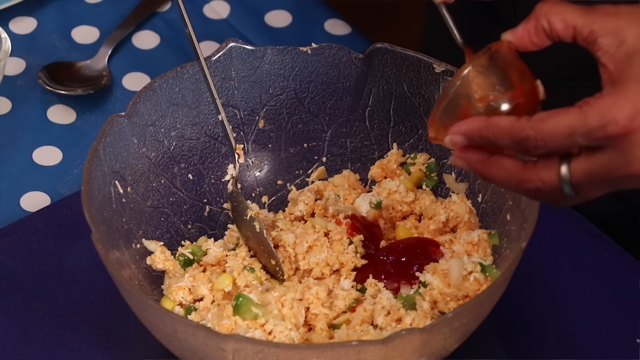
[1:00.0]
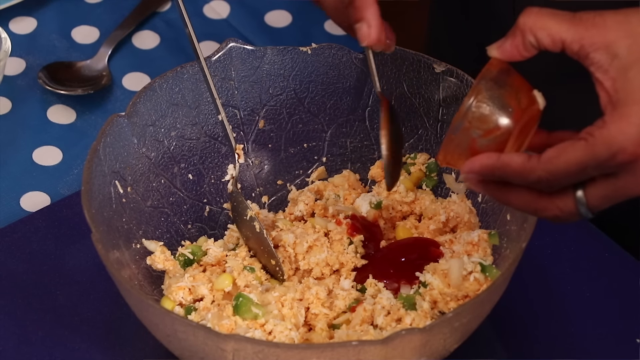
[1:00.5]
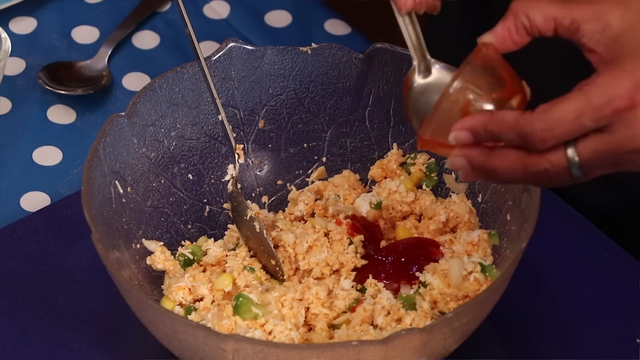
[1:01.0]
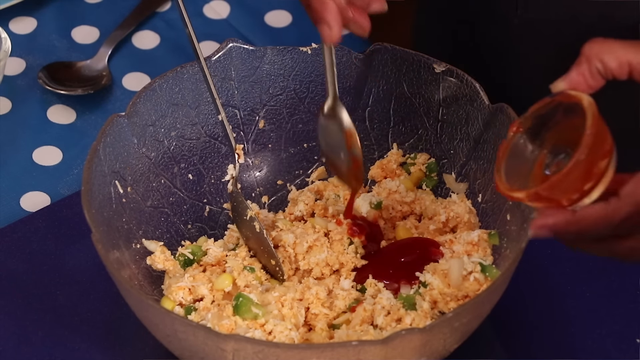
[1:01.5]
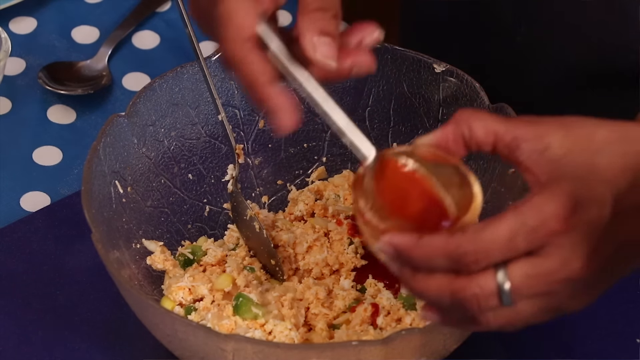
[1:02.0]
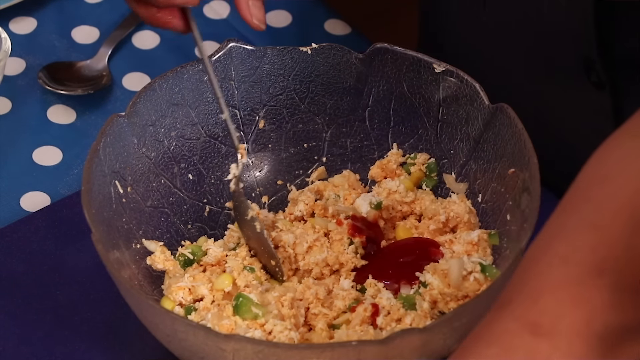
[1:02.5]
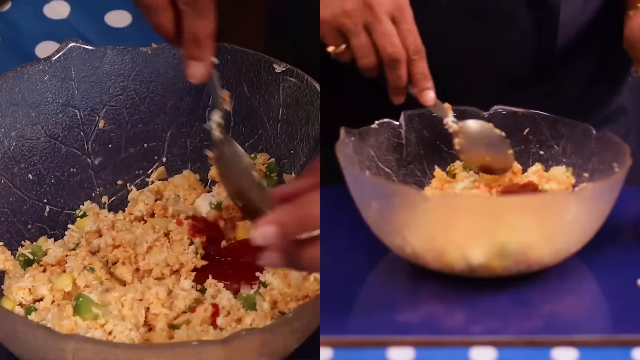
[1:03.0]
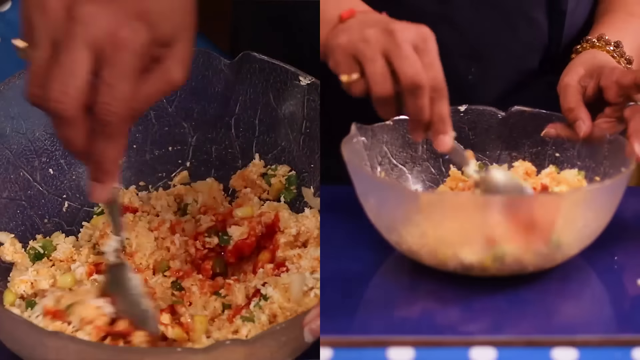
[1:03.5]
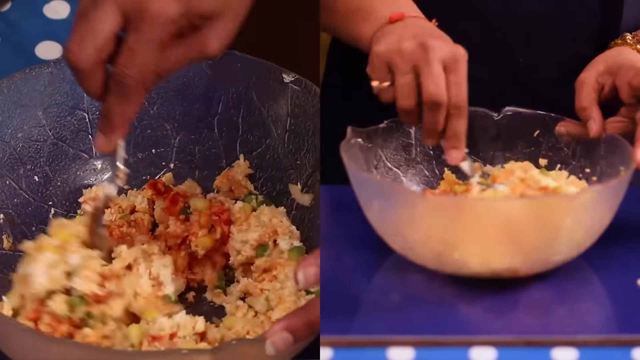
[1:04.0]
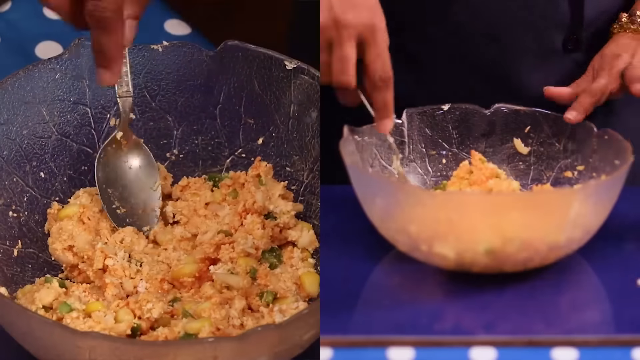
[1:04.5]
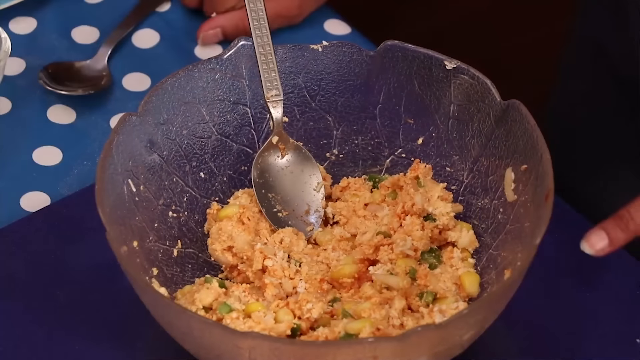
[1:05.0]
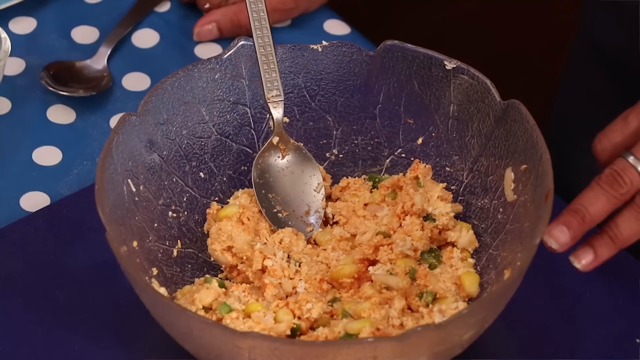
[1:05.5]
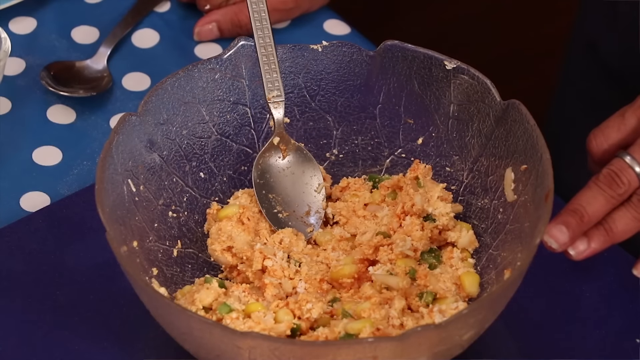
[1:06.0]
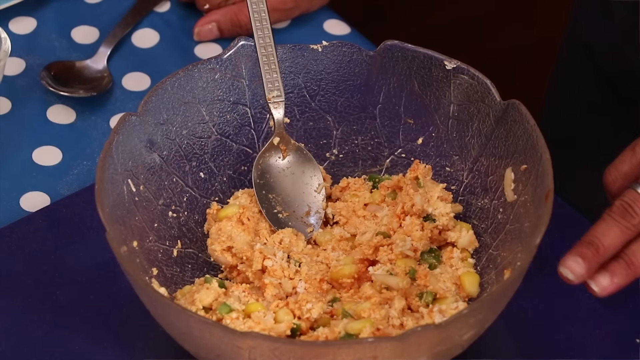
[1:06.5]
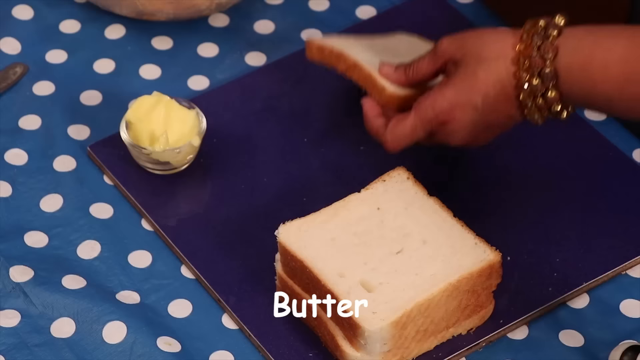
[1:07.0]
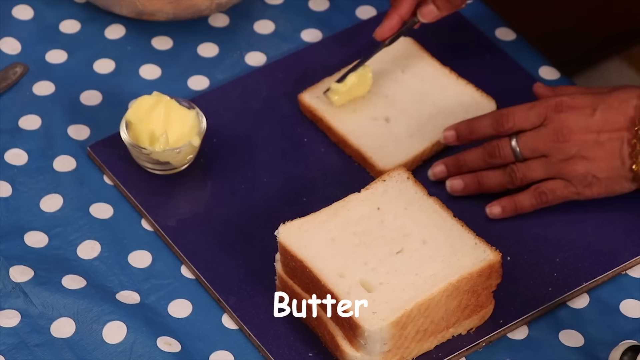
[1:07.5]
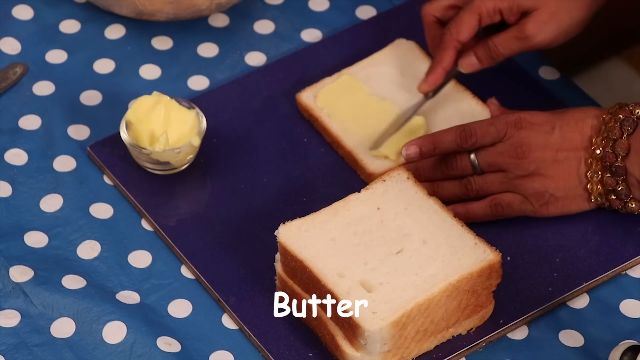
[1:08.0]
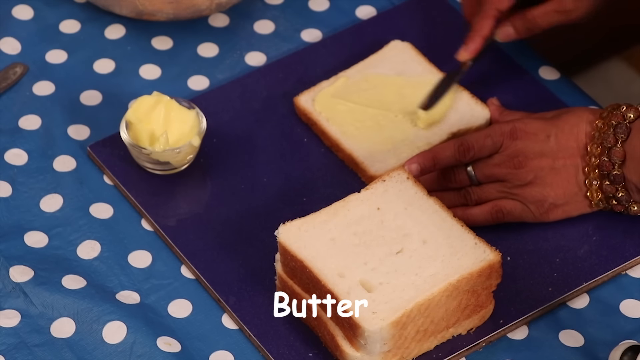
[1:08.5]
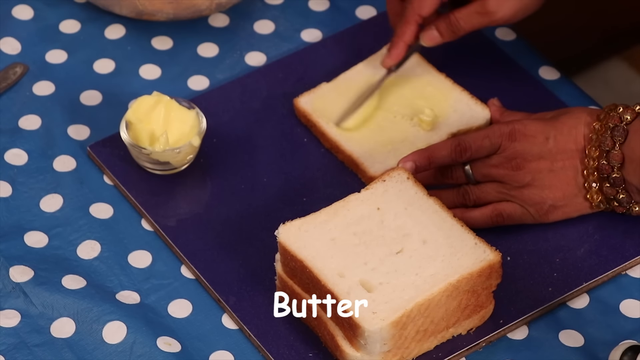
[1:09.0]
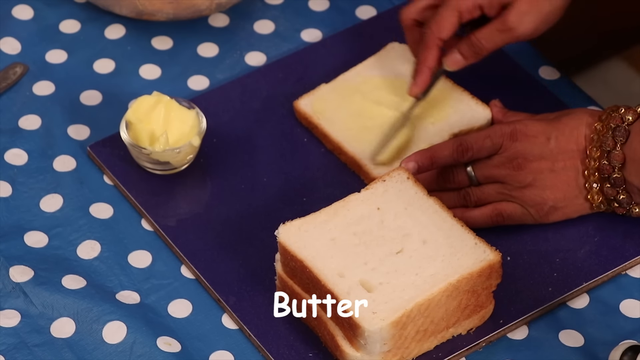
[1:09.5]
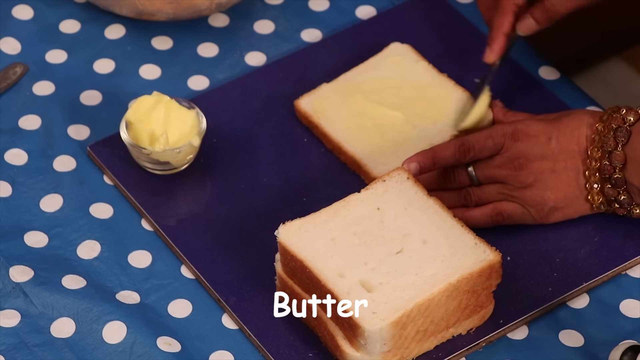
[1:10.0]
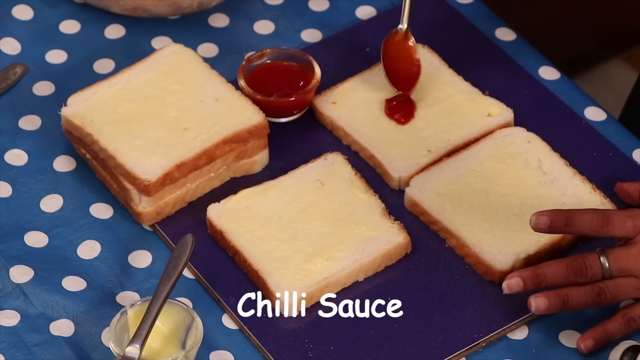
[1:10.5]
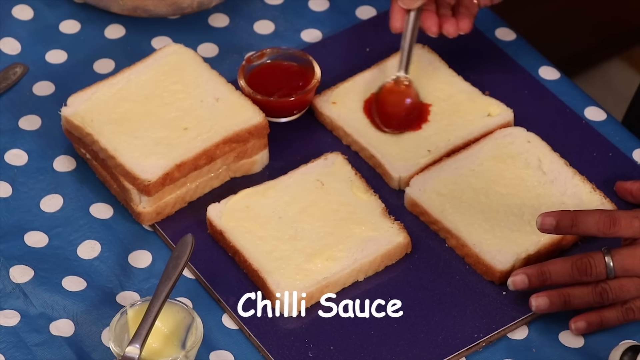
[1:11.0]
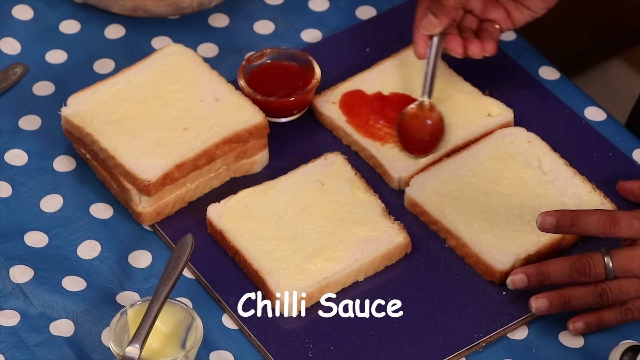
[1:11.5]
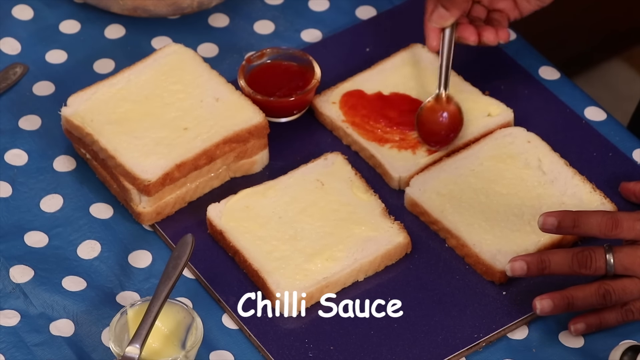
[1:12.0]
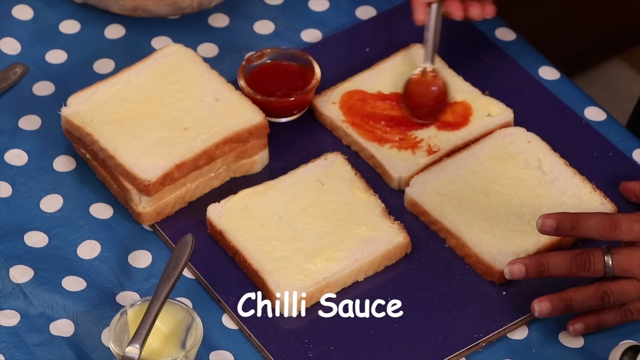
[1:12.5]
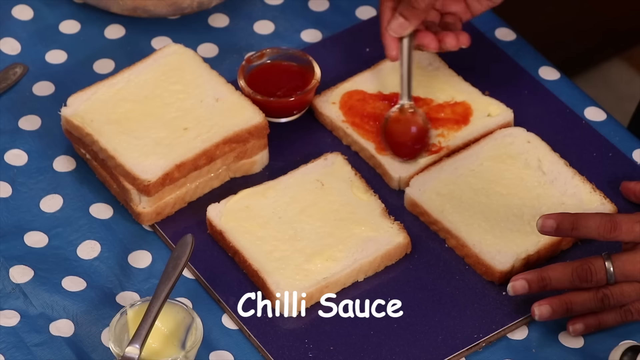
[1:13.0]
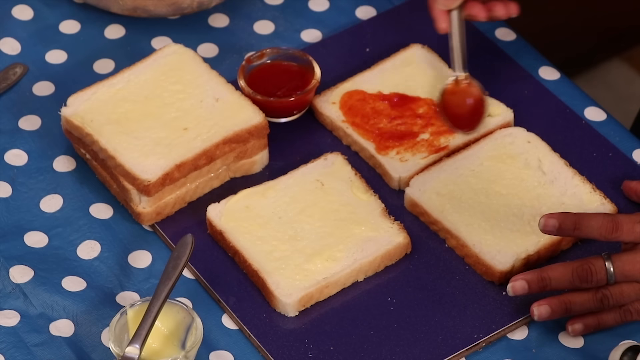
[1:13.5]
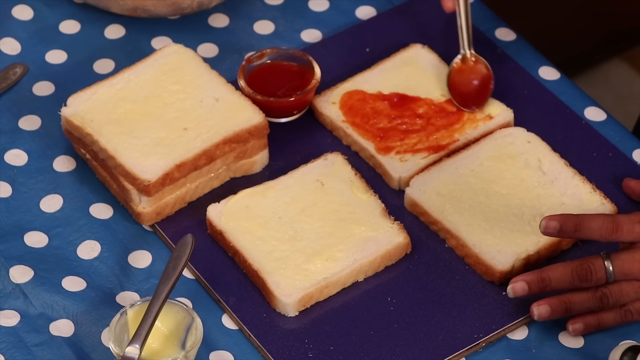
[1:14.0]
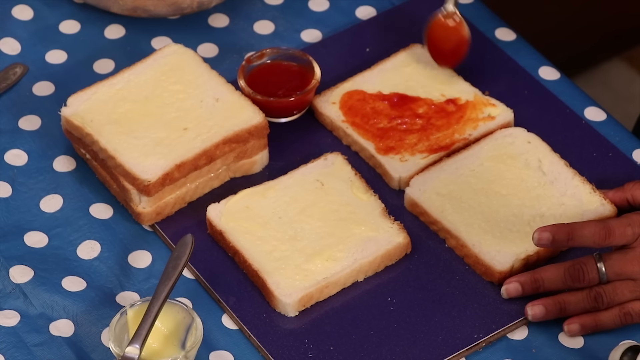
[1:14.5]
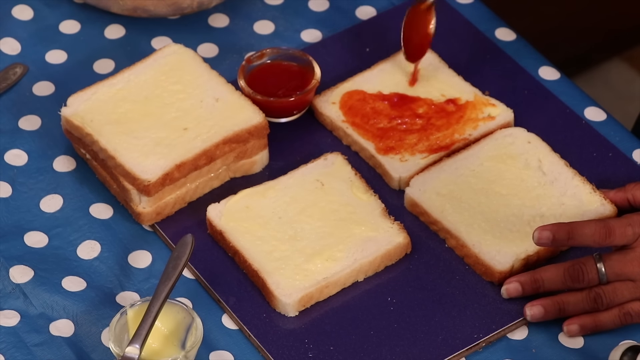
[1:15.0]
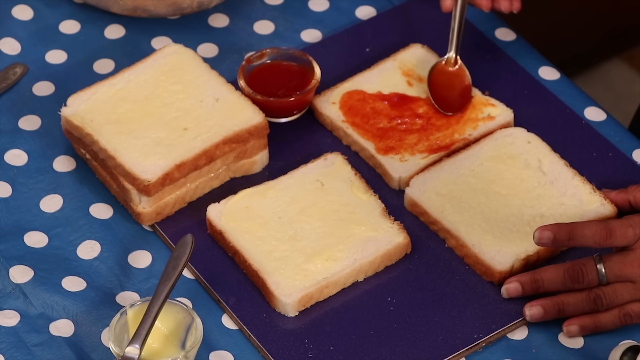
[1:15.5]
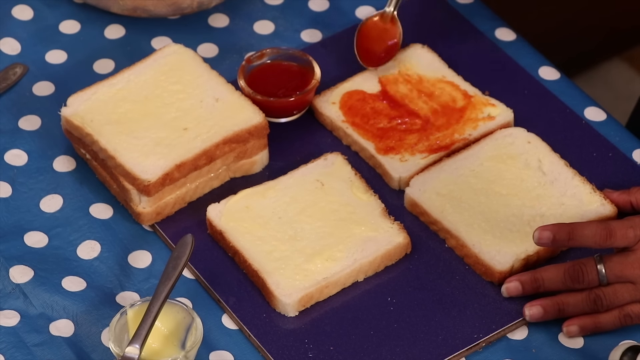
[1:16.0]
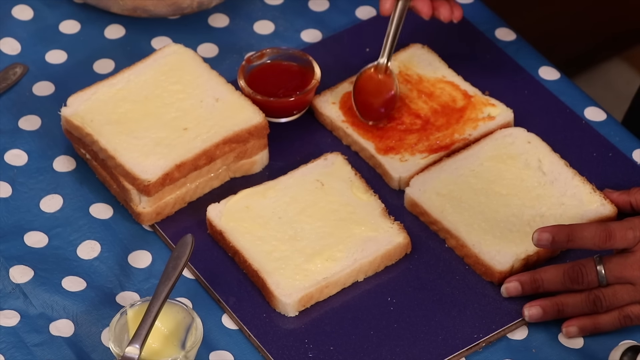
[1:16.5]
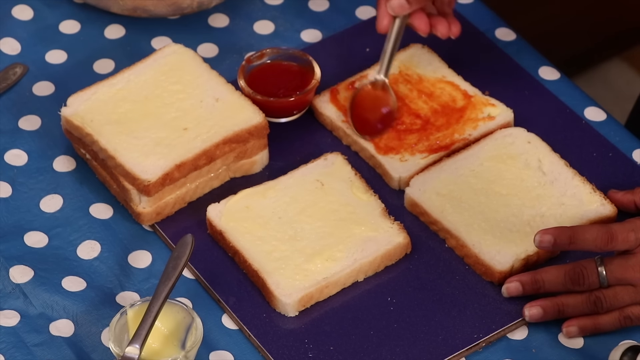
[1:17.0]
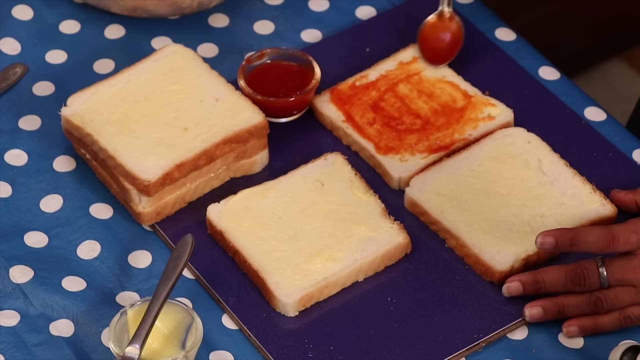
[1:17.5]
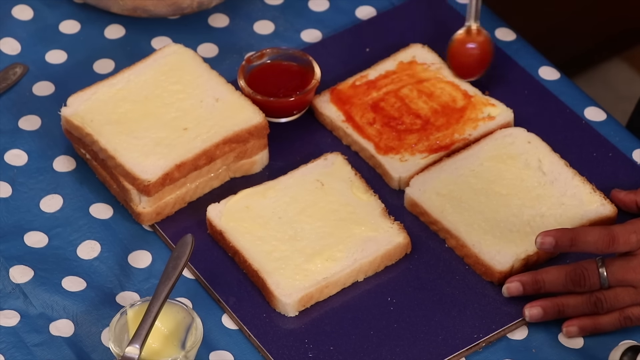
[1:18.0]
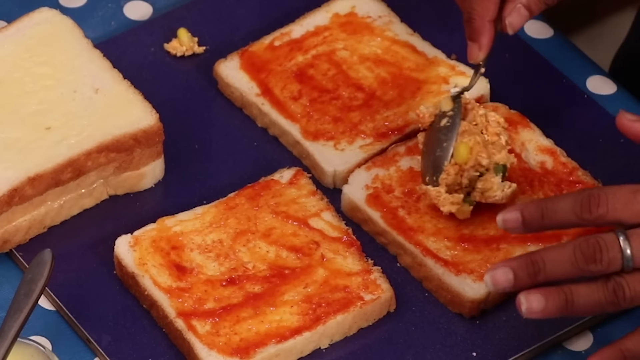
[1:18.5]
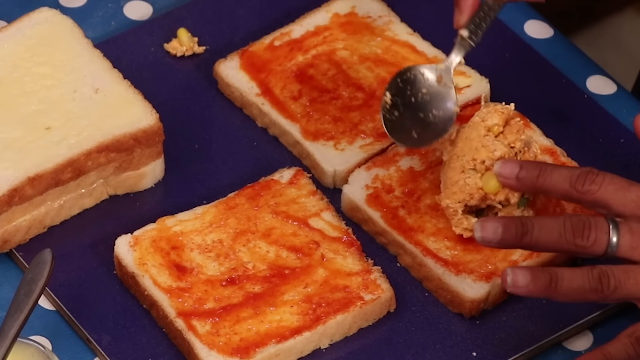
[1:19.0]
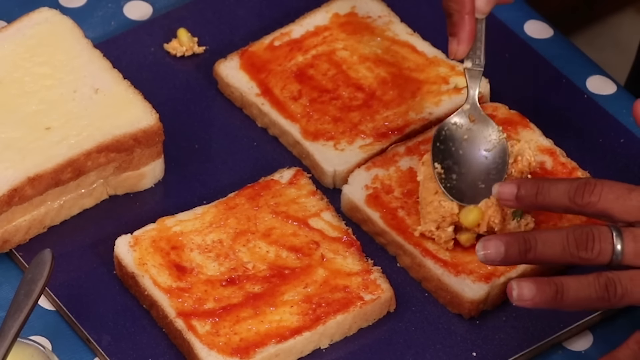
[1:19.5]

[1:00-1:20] She stirs with her right hand, and she appears to wear a gold ring on her pinky, with what looks like two or three gold bracelets on her left wrist. Next, stacks of bread are shown, with a little dollop of whipped butter on a blue, rectangular-looking surface. She spreads the butter across the bread, diagonally on the first slice, making sure it is even. She does three pieces laid flat, with another stack of three to the left of the chili sauce. Using the back of the spoon, she spreads chili sauce over every square inch, over the butter, spreading it up and down. She then adds the mixture from the bowl, scooping a good-size portion onto each piece of bread, and seems about to spread it as before, almost like with a knife but with the back of her spoon.